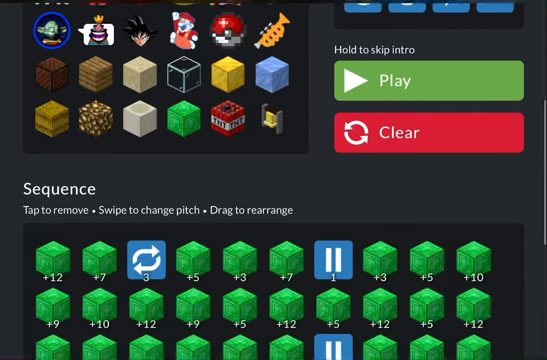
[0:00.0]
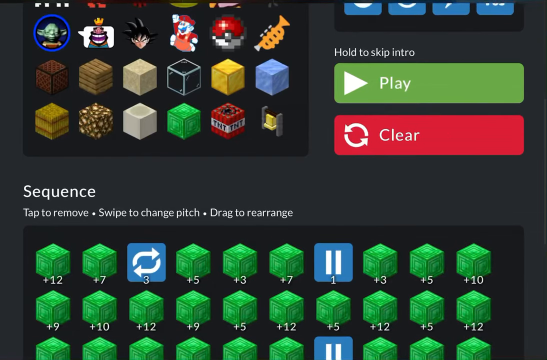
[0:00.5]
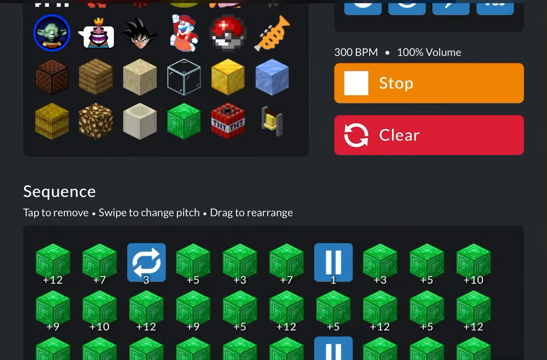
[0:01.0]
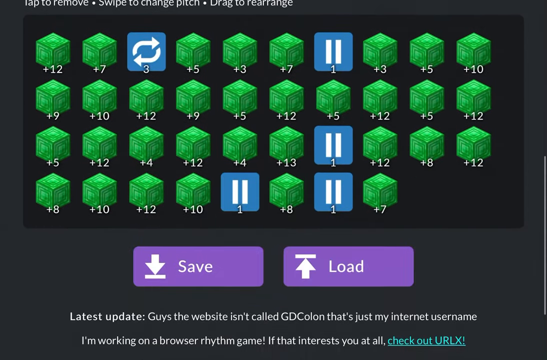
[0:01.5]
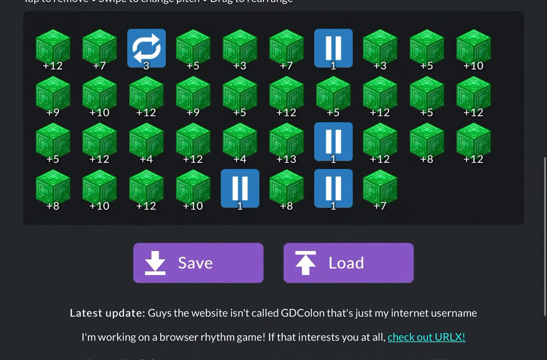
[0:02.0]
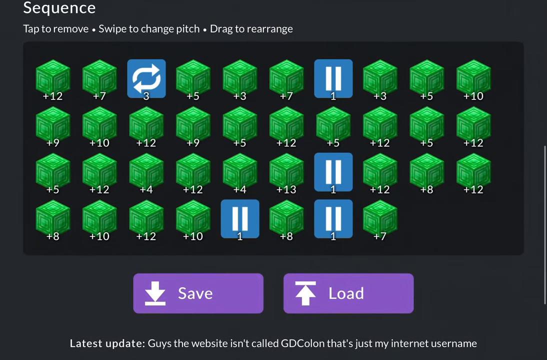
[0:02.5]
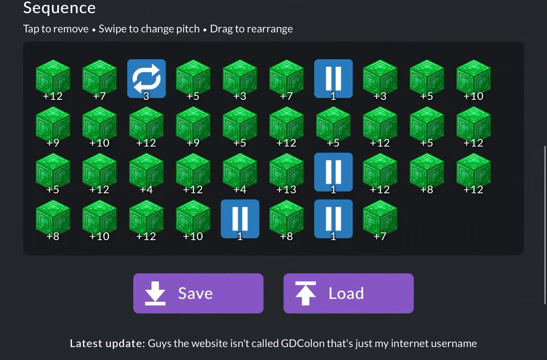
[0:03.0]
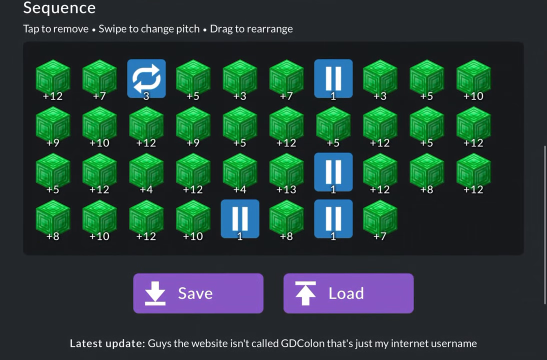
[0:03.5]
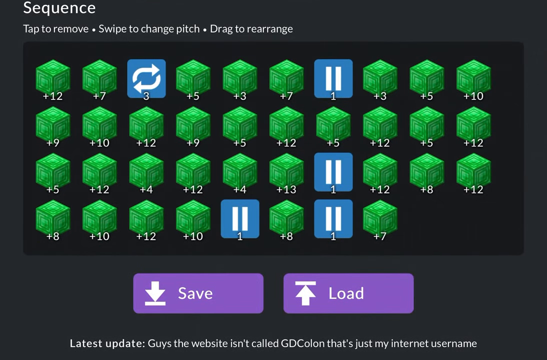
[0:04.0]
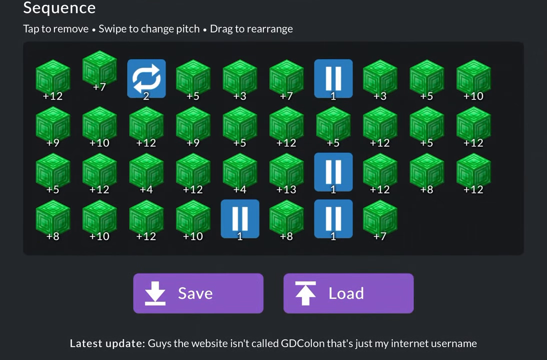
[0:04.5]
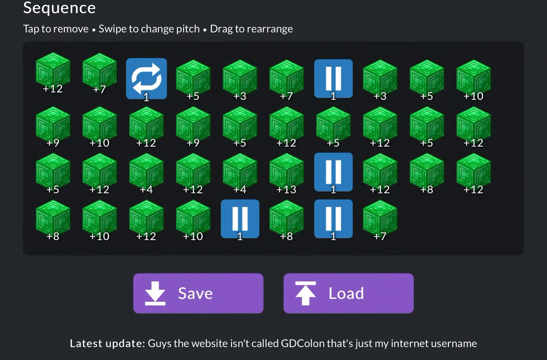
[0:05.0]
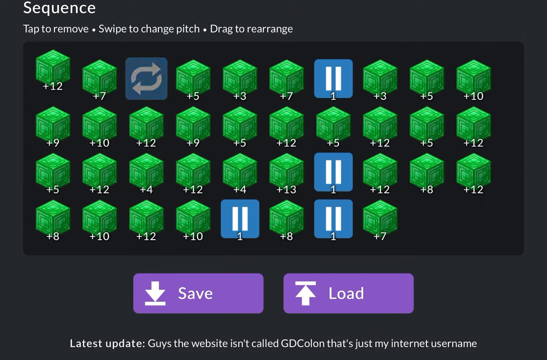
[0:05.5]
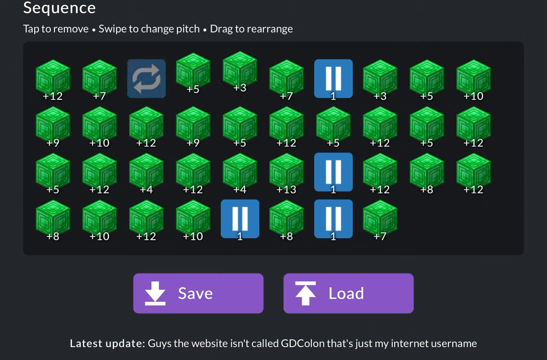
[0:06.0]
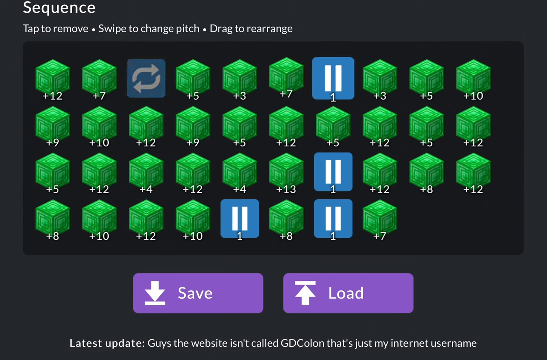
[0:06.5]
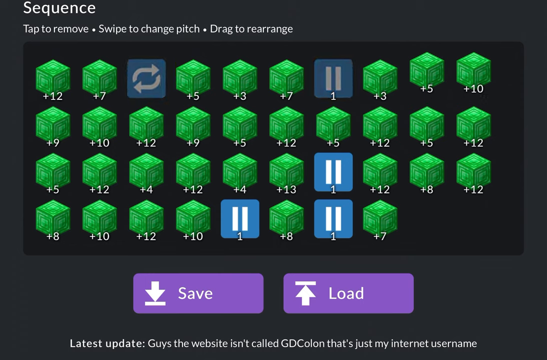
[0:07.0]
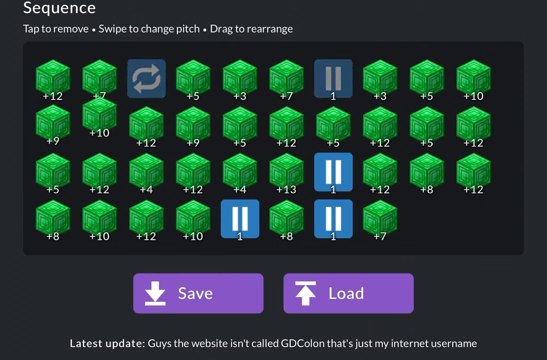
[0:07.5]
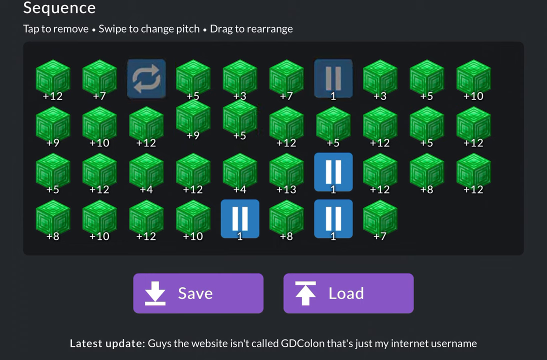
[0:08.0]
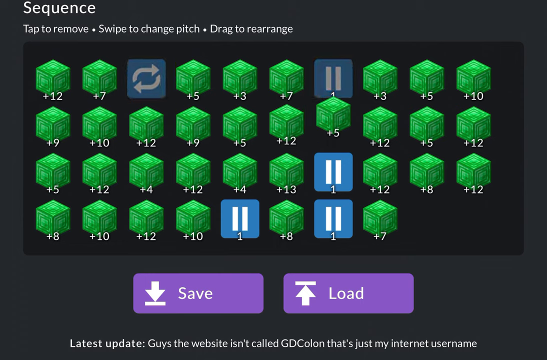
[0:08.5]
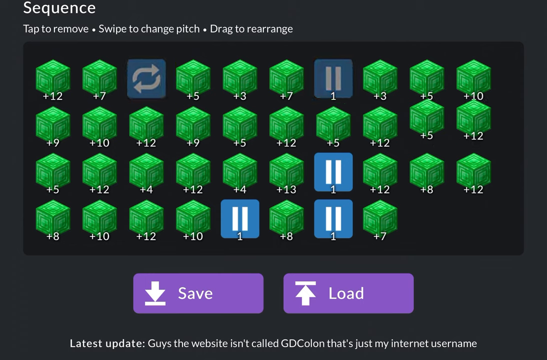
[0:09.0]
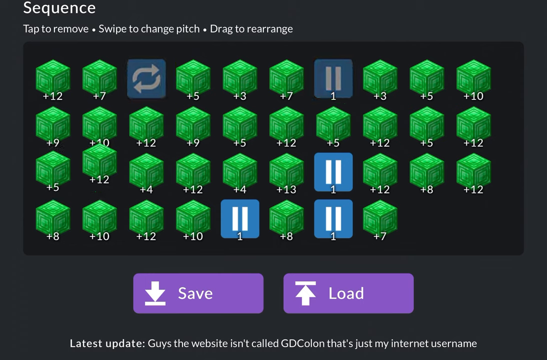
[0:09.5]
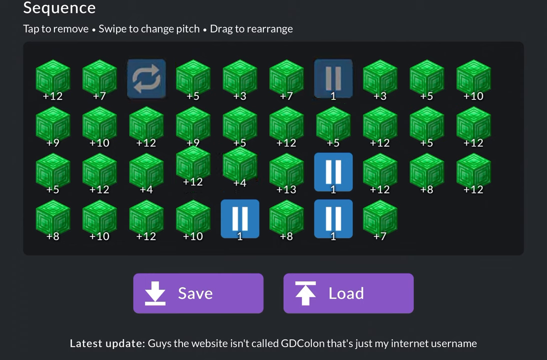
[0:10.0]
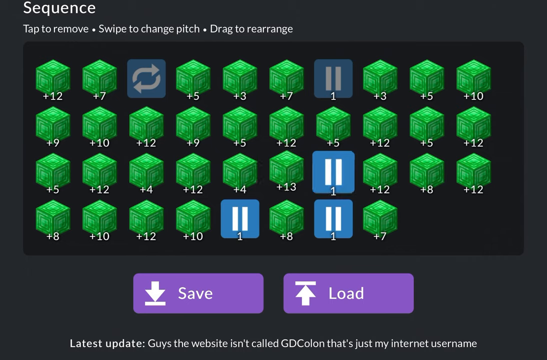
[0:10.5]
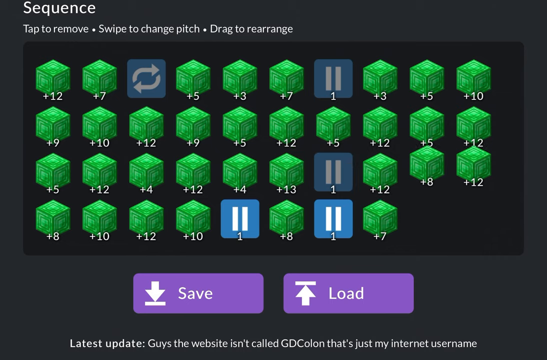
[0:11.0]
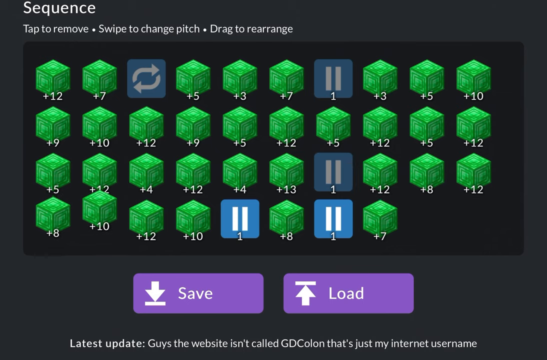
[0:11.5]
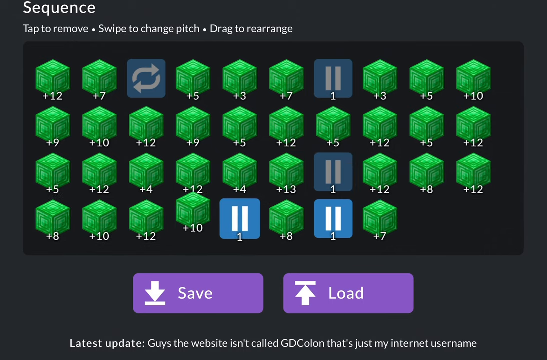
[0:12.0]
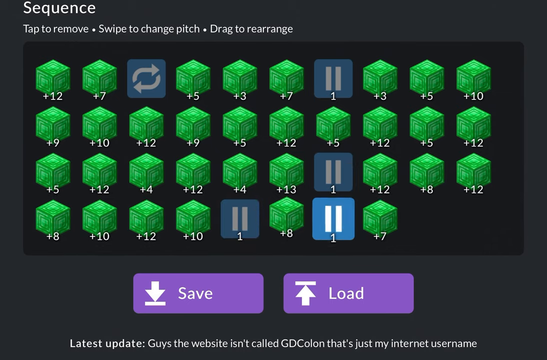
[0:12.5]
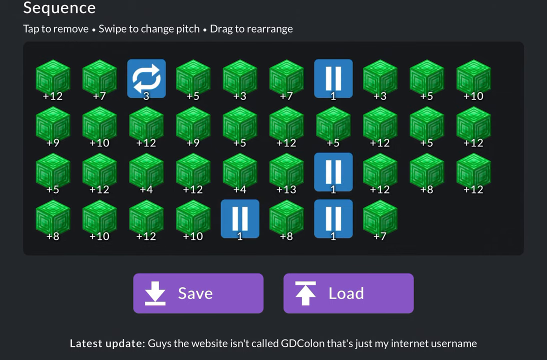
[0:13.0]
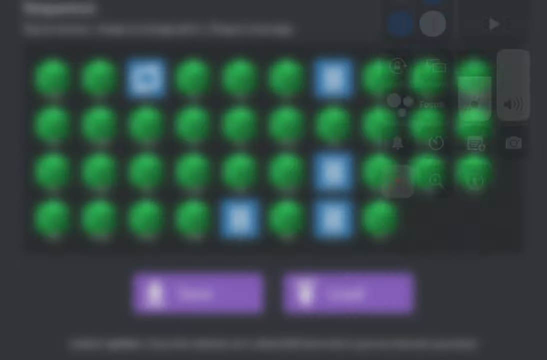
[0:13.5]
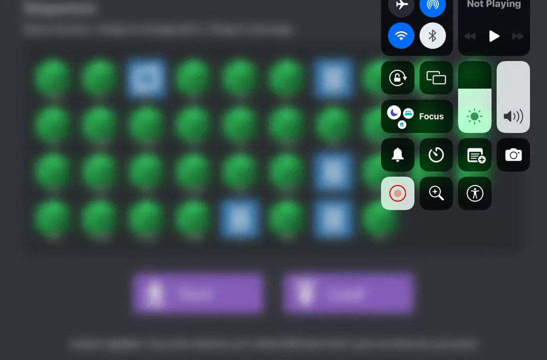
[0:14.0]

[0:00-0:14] A video game is shown, apparently being played on a cell phone. Several green boxes appear on screen, all of them numbered. There are four blue boxes, each with two vertical lines in it, and a box with two curved arrows. There is a dropdown, along with a play button and a clear button. Text reads "hold to skip intro." The game shows the characters in the upper left-hand corner, along with other colored boxes used to play the game. The screen indicates that the game can be saved and loaded. Text reads "sequence, tap to remove, swipe to change pitch, drag to rearrange," giving the basics of how to play, and then the characters are shown again.